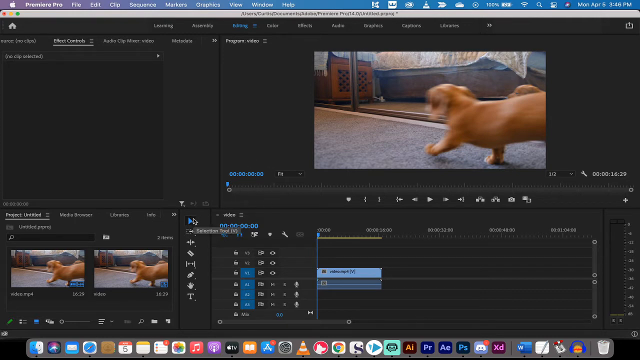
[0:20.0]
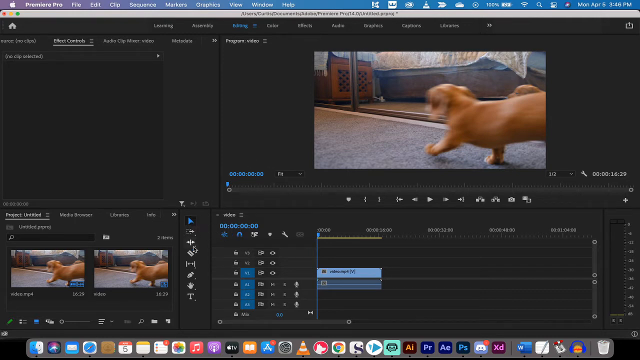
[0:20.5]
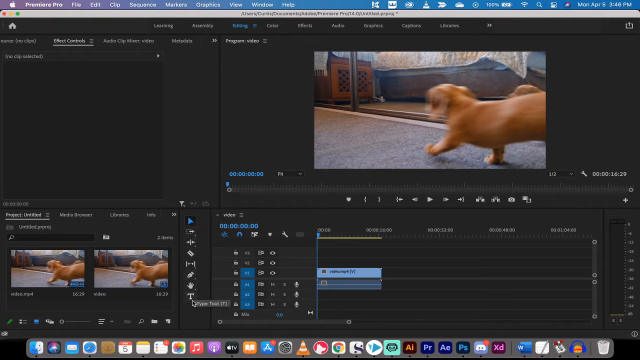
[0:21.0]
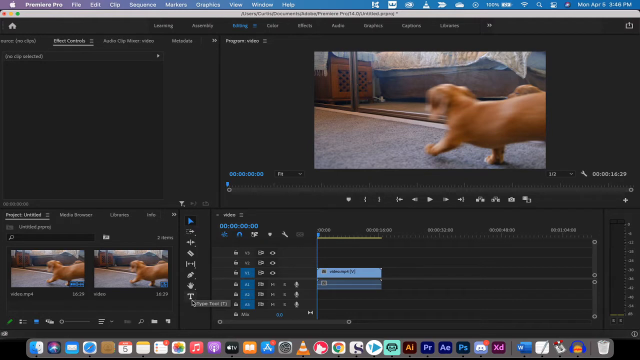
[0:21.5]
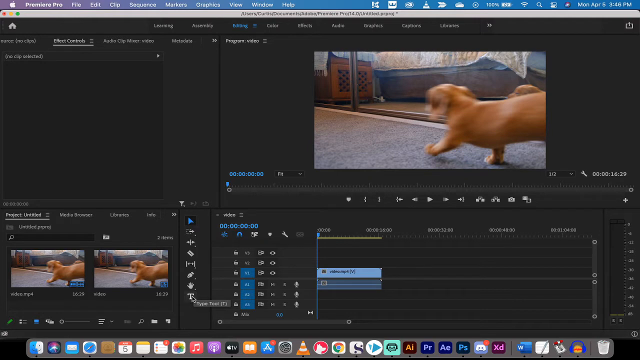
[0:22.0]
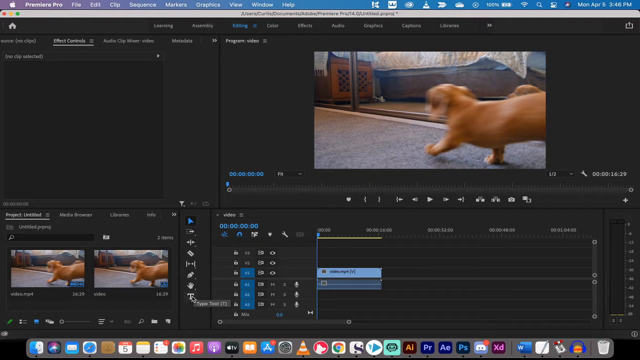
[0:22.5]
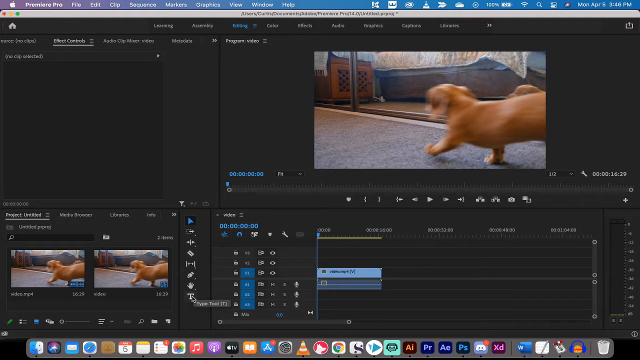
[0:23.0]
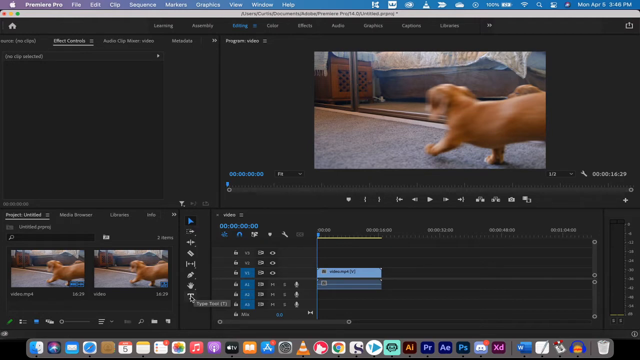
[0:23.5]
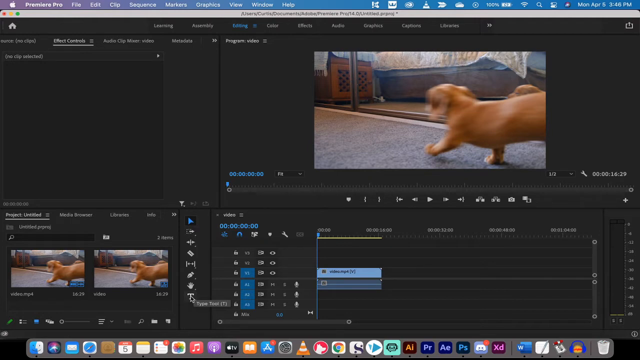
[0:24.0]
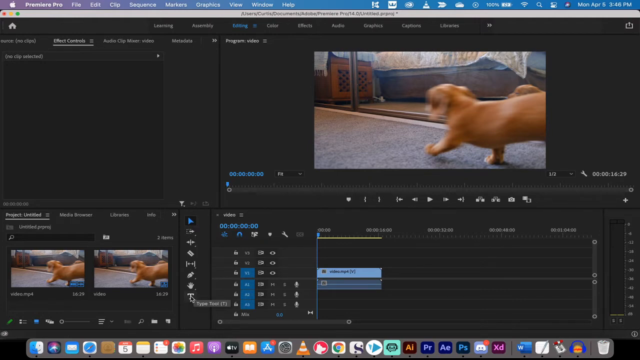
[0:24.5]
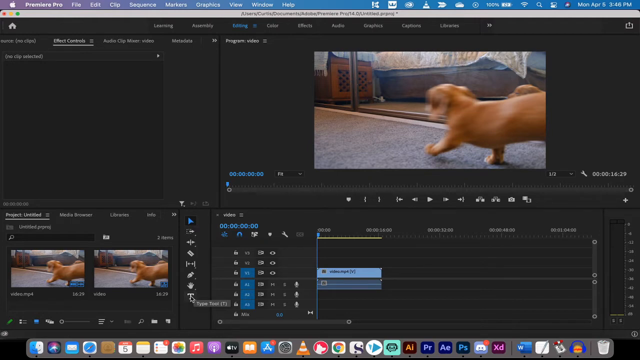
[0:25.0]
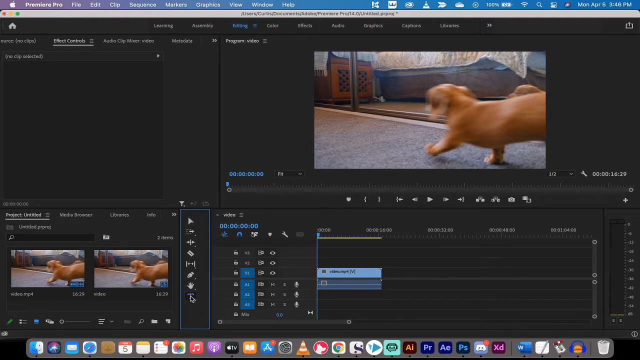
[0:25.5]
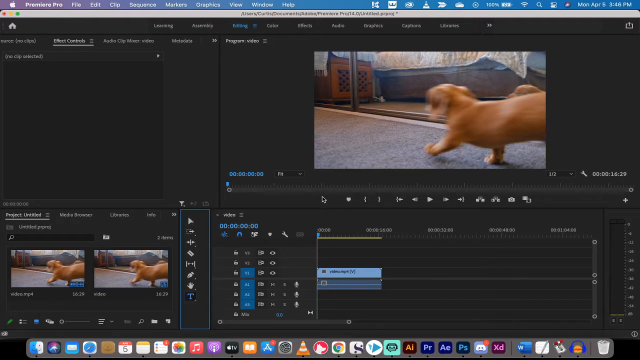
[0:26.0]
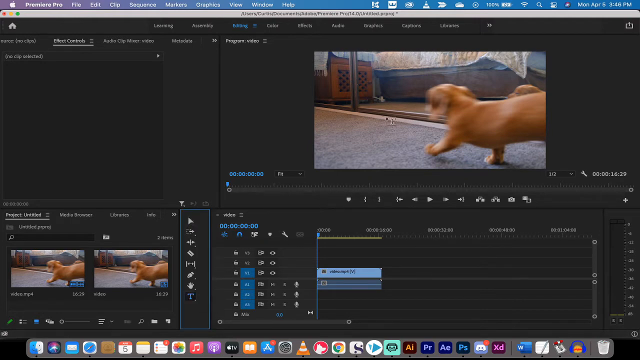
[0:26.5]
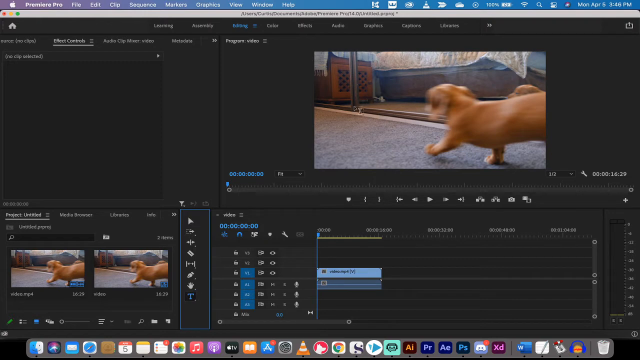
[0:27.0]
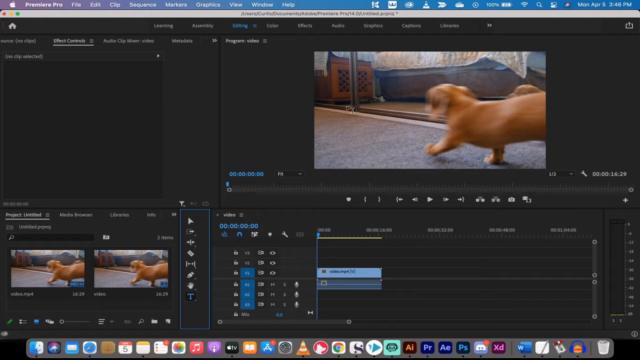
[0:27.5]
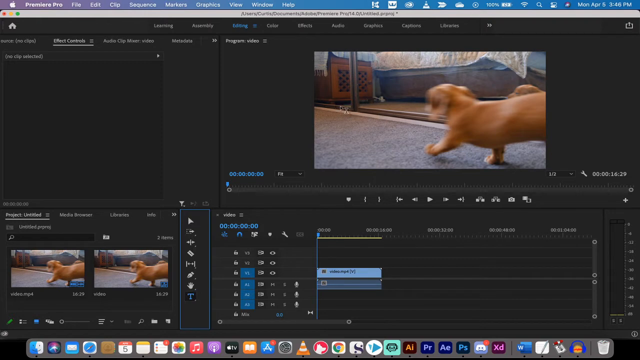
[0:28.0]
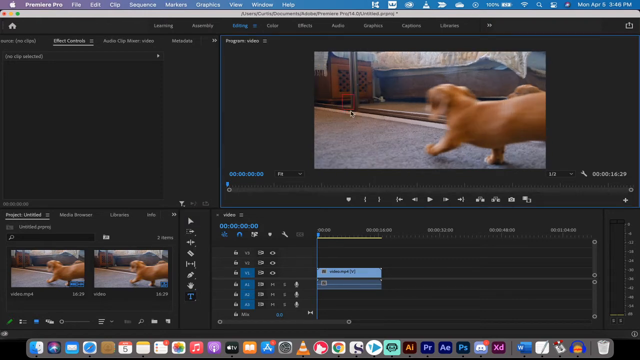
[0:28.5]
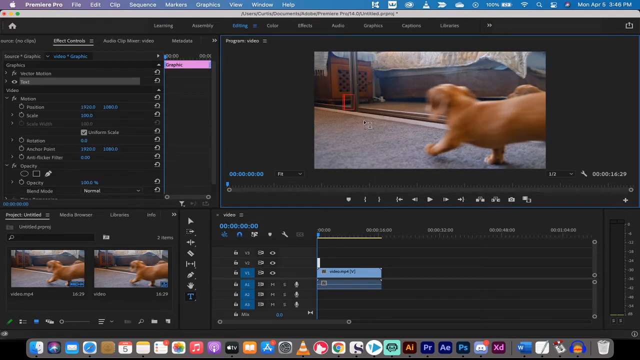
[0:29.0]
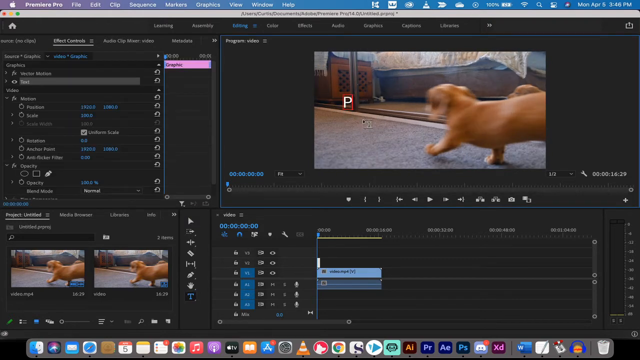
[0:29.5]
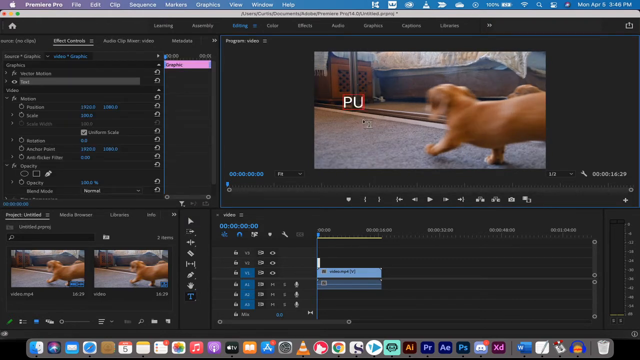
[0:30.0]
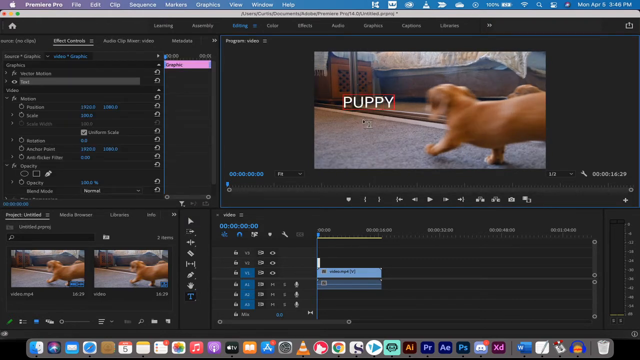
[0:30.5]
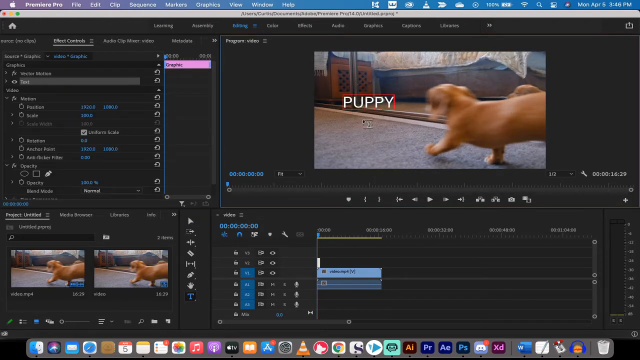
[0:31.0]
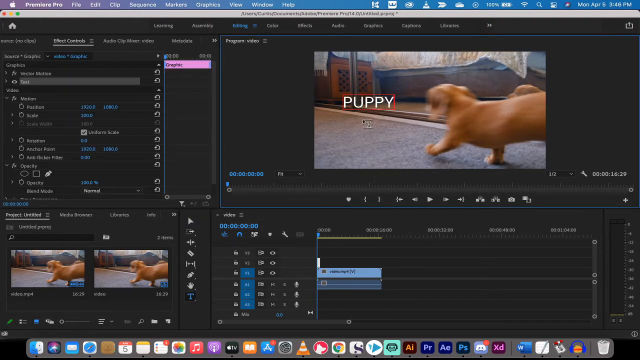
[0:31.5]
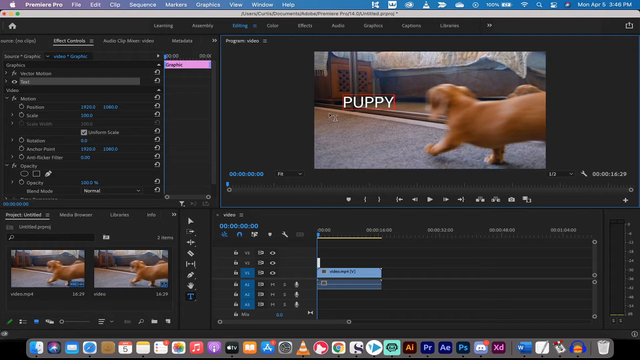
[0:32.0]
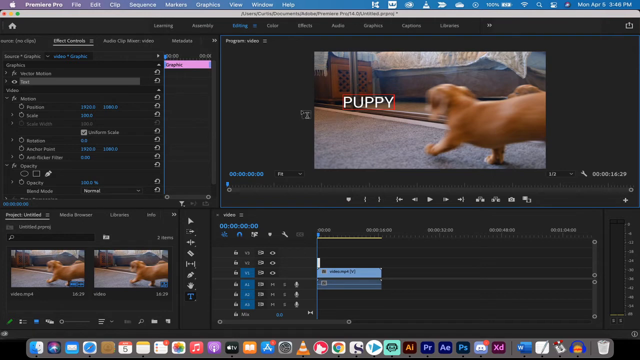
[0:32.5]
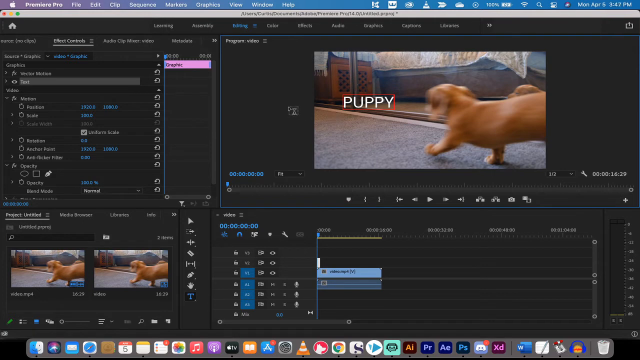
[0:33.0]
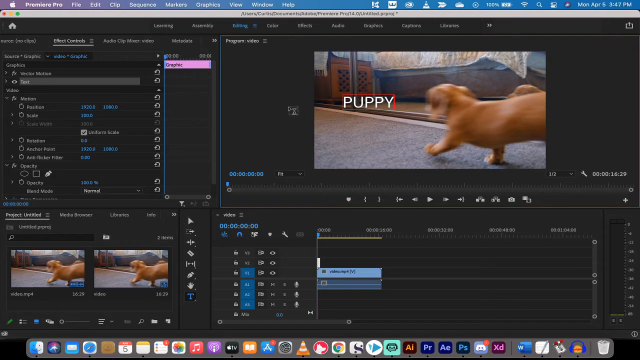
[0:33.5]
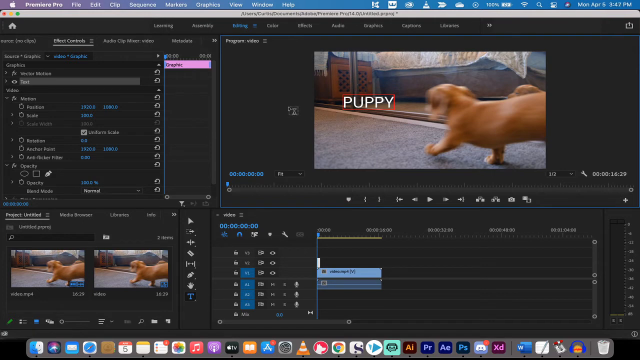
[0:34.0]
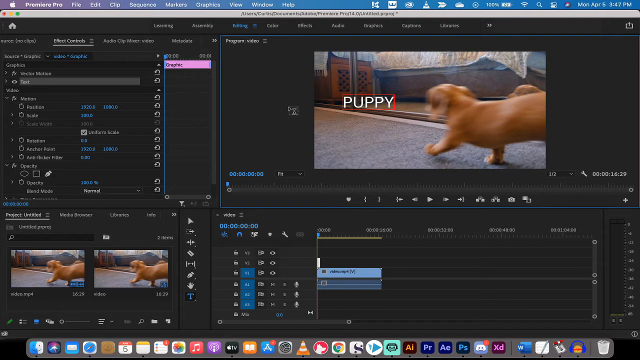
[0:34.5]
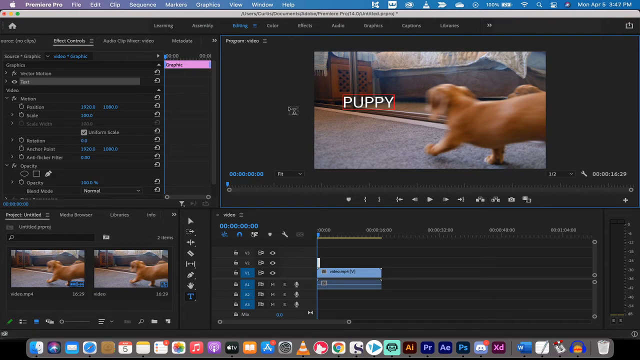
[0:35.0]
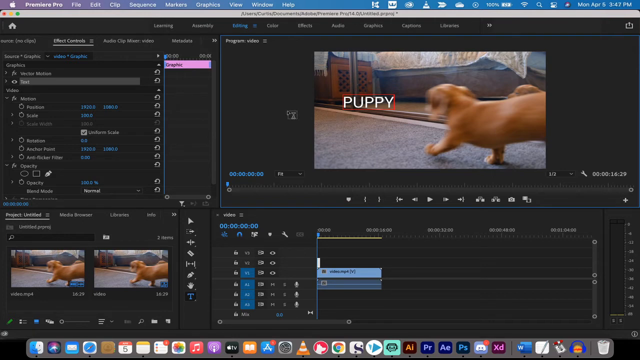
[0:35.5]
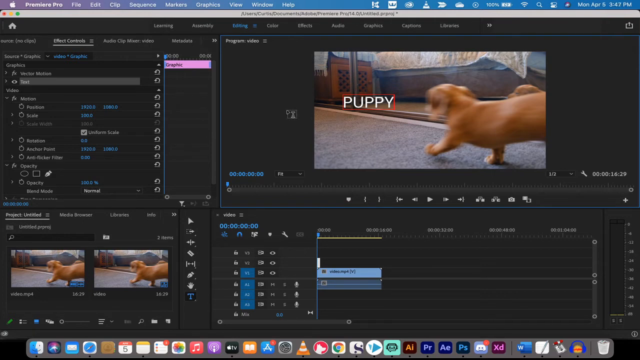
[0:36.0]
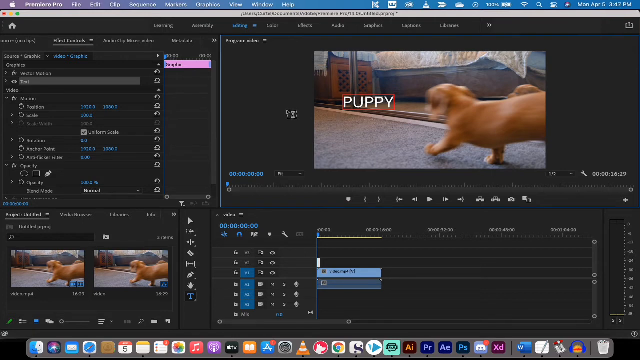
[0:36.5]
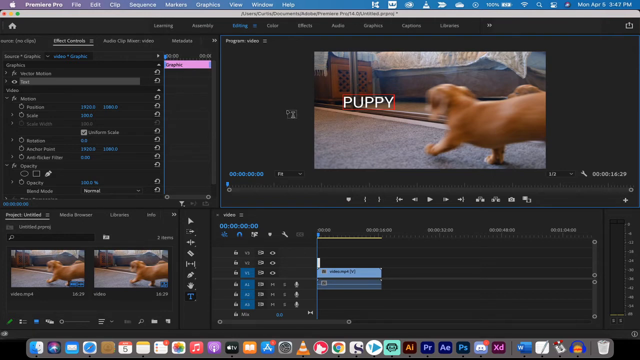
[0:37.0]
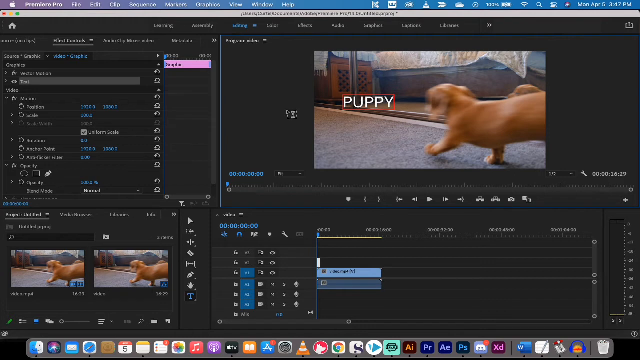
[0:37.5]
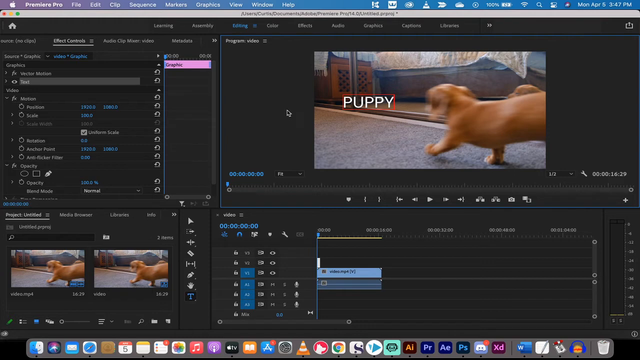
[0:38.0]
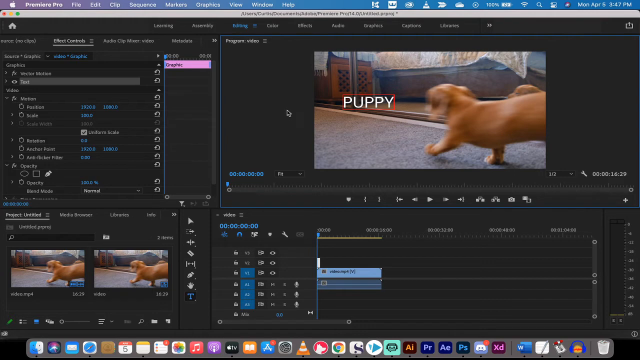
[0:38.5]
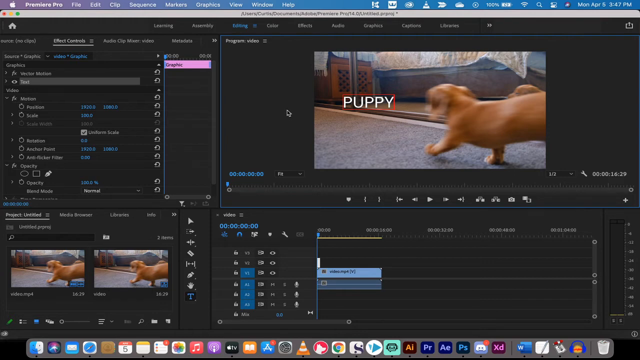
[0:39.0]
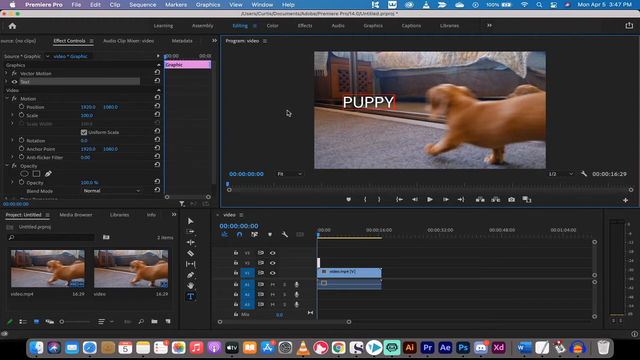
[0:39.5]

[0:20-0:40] In Premiere Pro, the cursor, a black arrow desktop cursor, hovers over one of the options on the bottom left of the screen for a second before moving down to the add text icon, the last option on the bottom left. It hovers over the text option, moves slightly right and then back left, and selects the text icon, a letter T. Once selected, the icon has a dark black background around it, indicating that it has been pressed. The cursor then moves up to the top right where the video preview image is, and a text cursor appears where the mouse cursor has been placed, indicating it is ready for text to be typed.